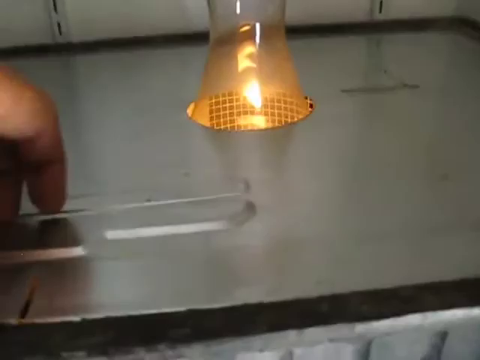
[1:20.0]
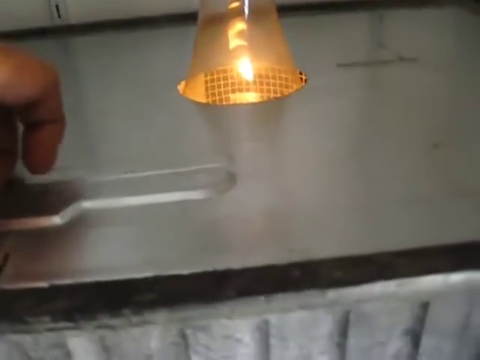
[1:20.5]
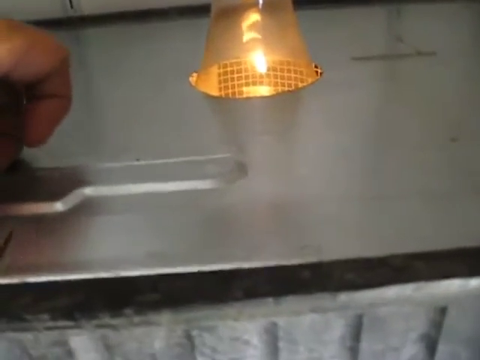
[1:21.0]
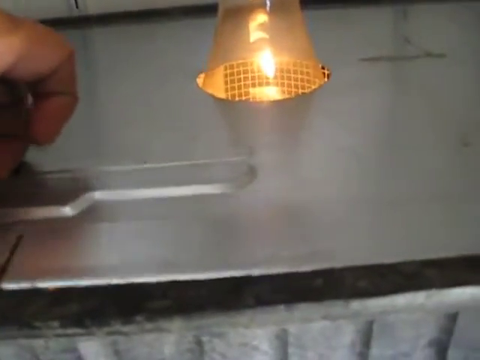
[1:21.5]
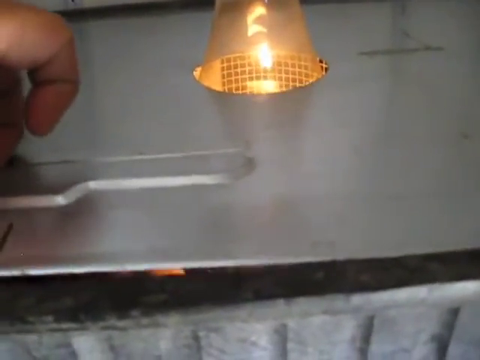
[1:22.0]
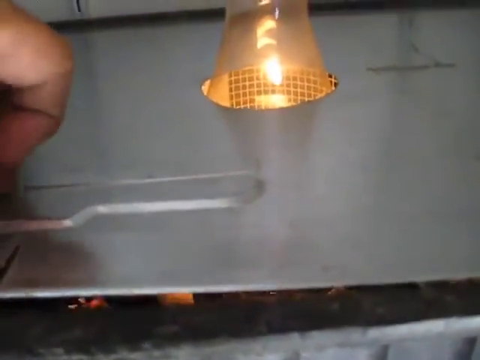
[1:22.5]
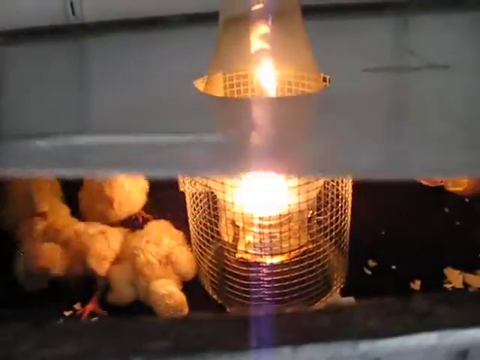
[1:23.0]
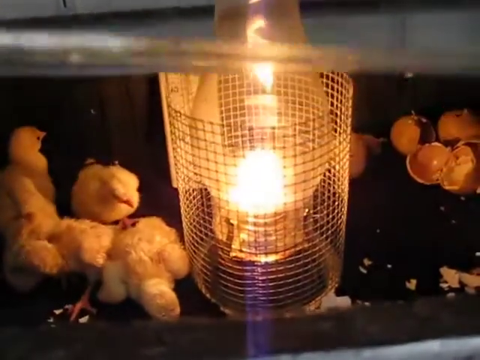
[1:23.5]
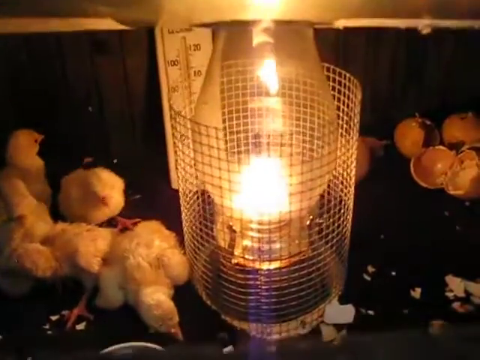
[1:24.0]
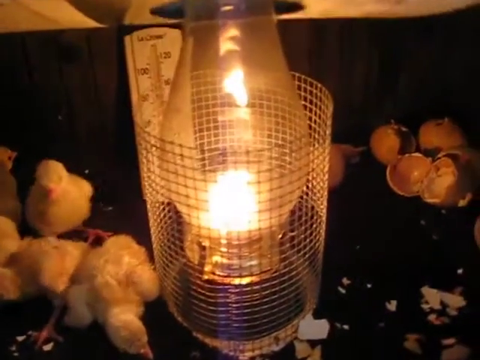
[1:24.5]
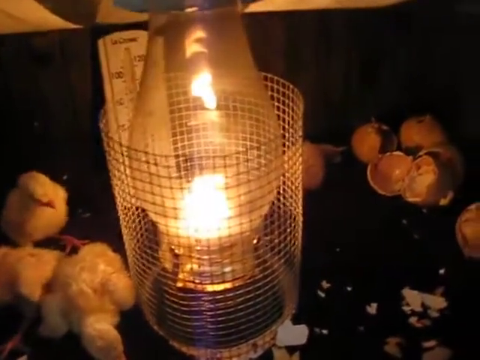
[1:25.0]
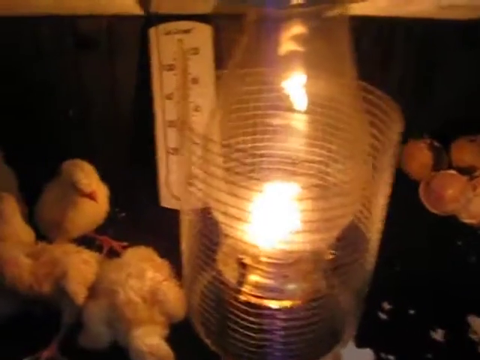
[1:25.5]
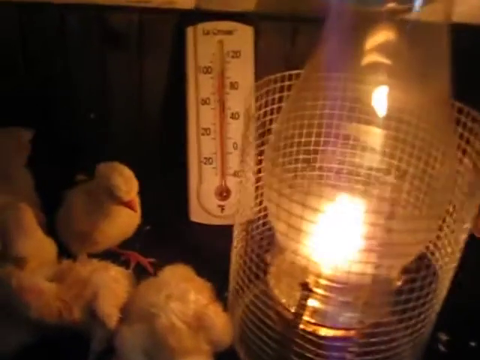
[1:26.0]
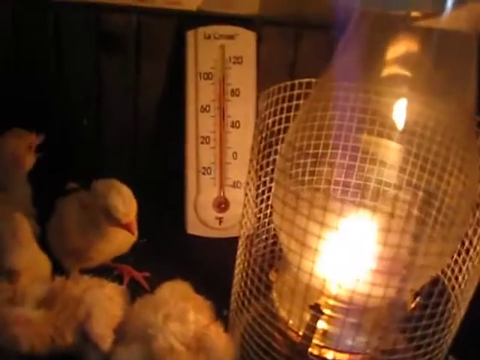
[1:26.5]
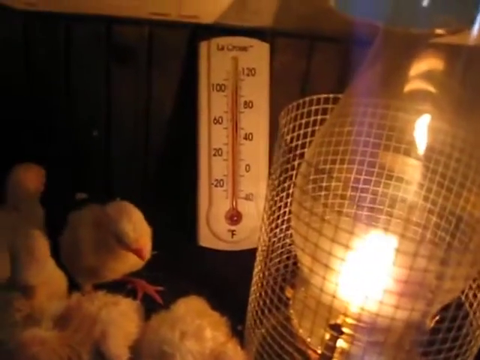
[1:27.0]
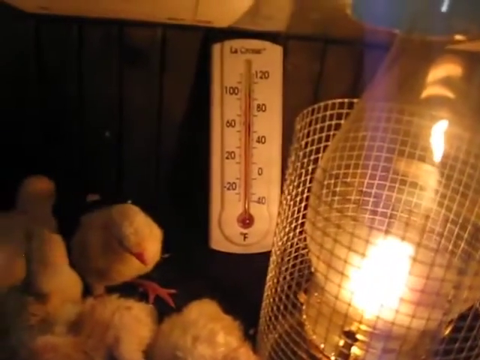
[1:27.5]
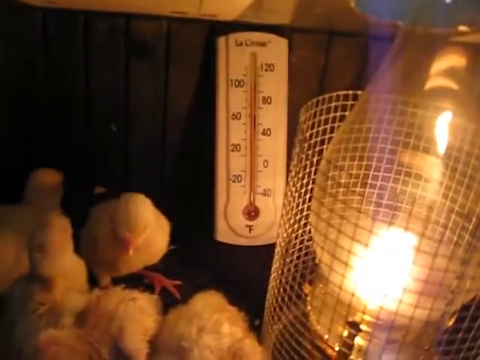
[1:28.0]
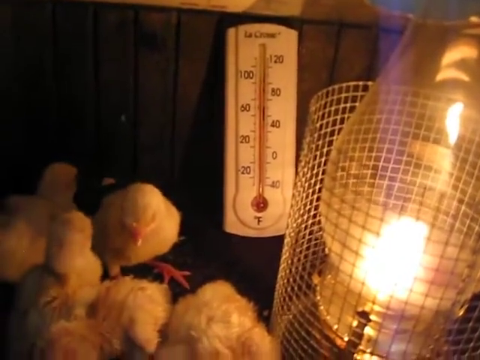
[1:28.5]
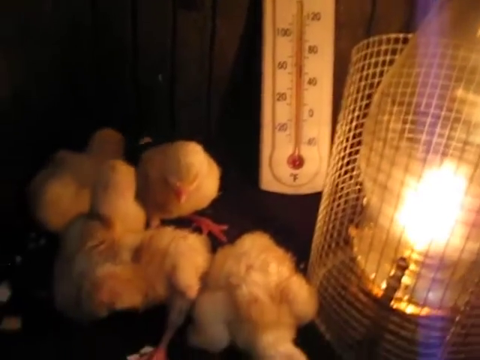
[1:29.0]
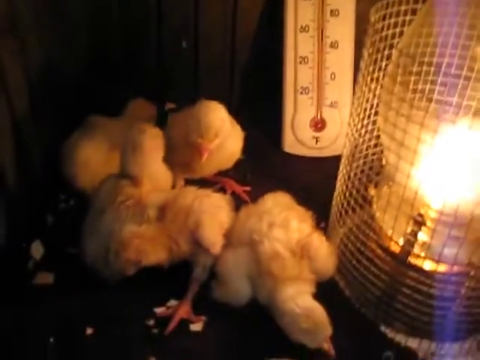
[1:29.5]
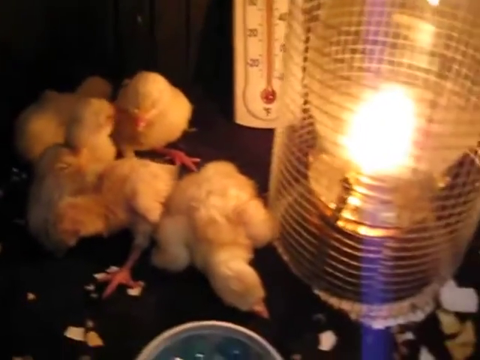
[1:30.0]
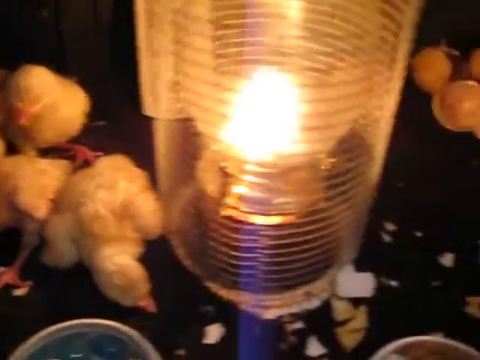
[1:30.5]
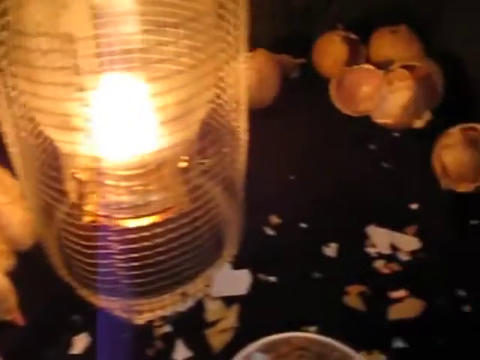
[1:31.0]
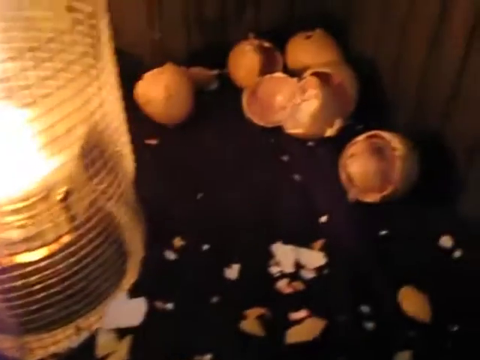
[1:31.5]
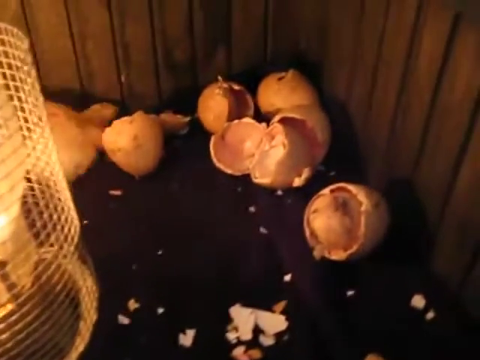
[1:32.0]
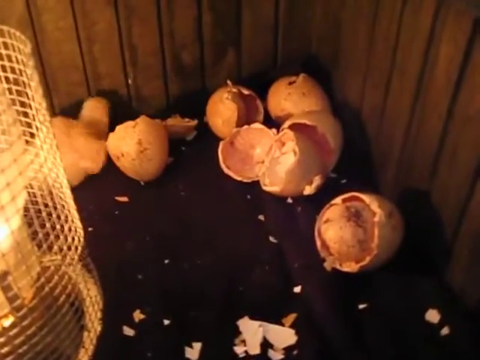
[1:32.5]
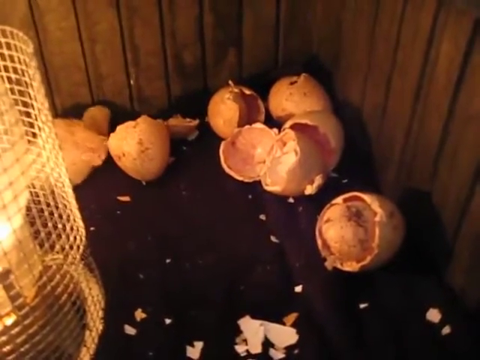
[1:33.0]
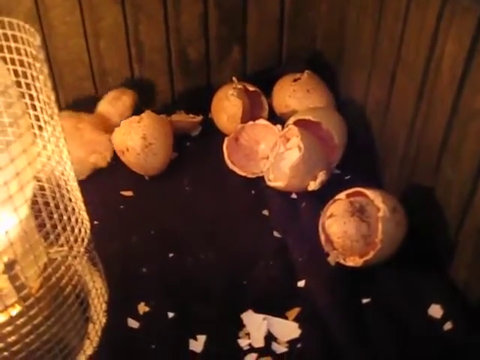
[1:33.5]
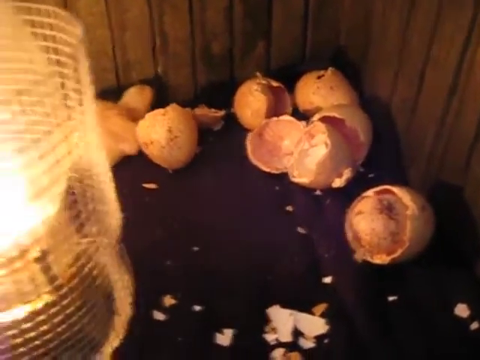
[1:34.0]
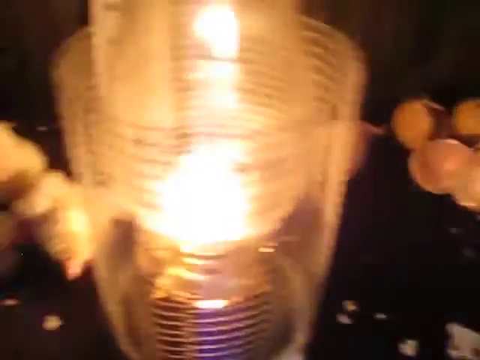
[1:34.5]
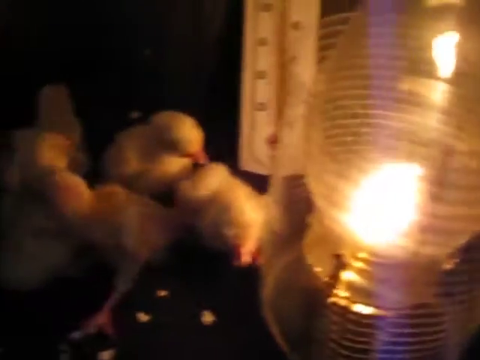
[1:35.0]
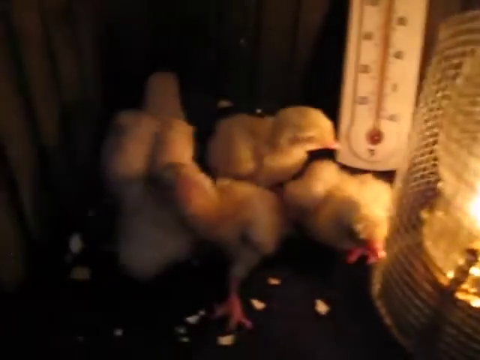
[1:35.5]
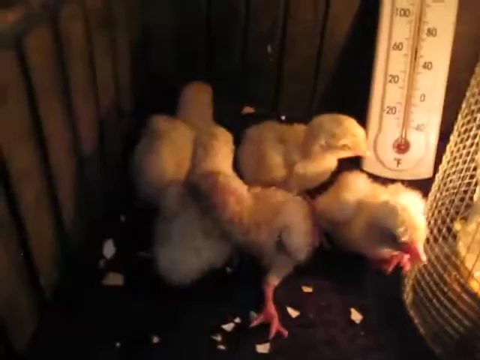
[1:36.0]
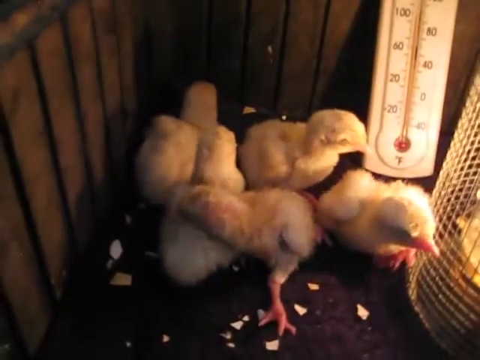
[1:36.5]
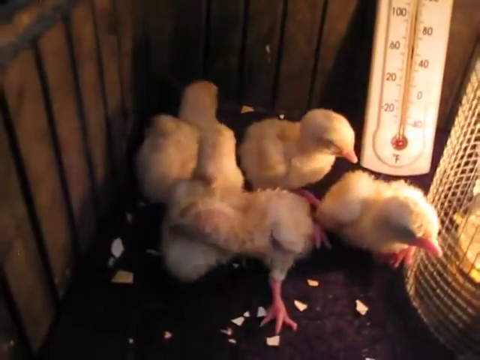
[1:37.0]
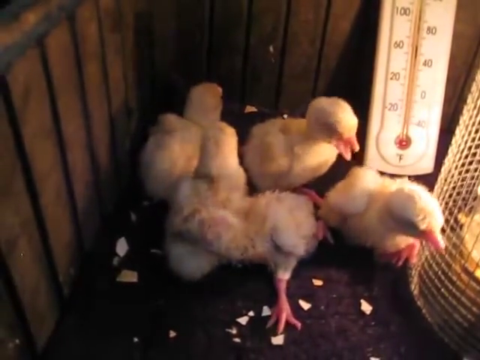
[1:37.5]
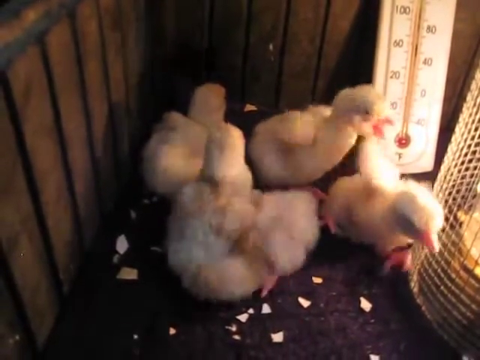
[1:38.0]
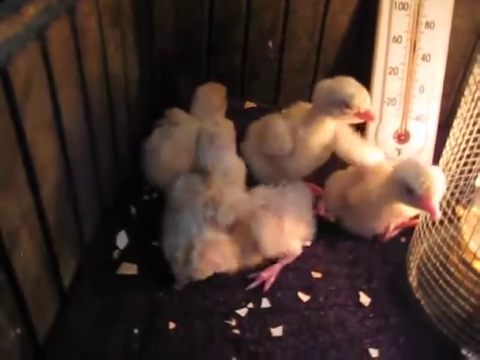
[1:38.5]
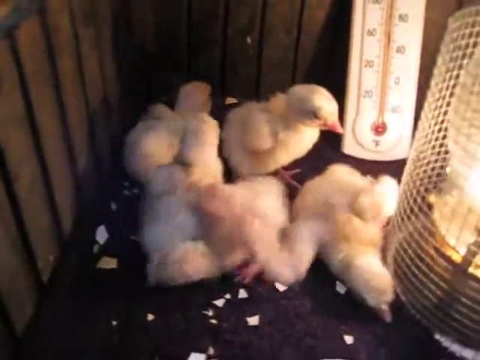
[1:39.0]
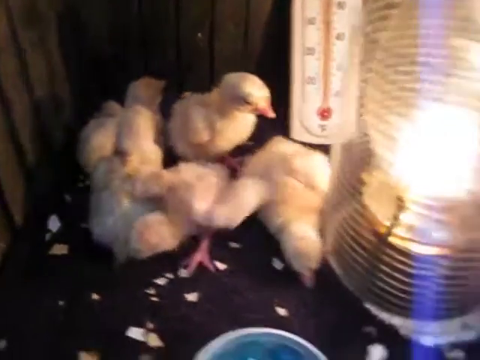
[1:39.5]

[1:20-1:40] The man seems to continue explaining something about the machine. He lifts the covering of the gray machinery, and inside there is a lamp in the middle providing heat, with small chicks and, on the other side, eggs and eggshells, suggesting the chicks have apparently just hatched. At the top inside the gray box is a thermometer marked from -40 to -20, 0, 20, 40, 60, 80, 100 and 120. Other shells have been pushed together, and cracked eggshells are visible.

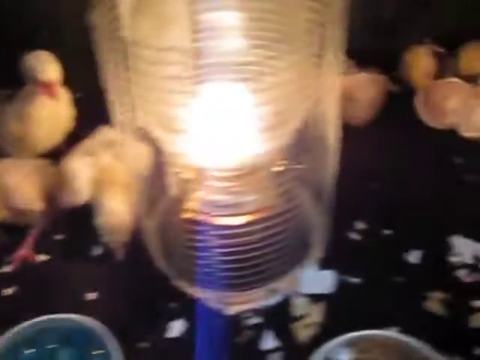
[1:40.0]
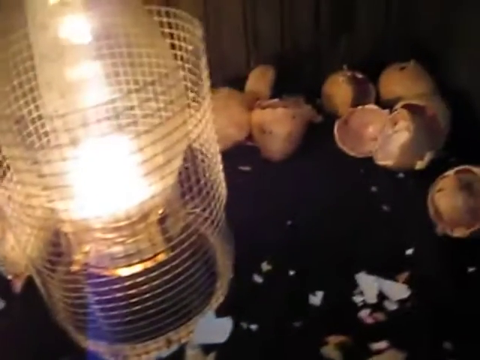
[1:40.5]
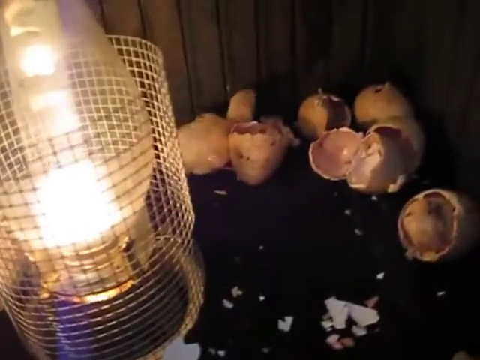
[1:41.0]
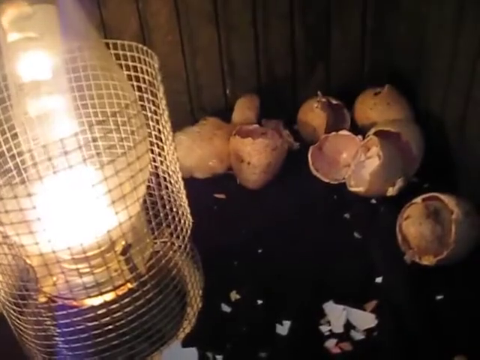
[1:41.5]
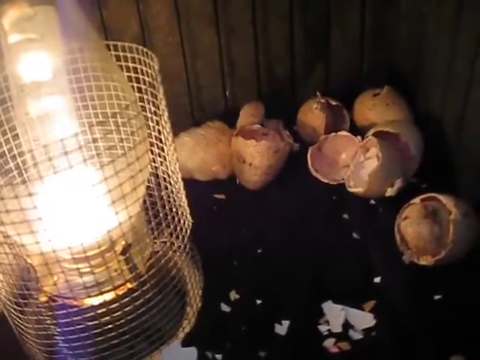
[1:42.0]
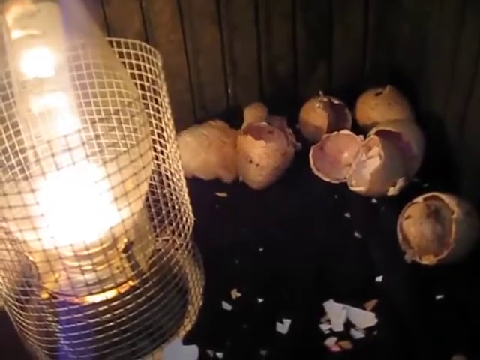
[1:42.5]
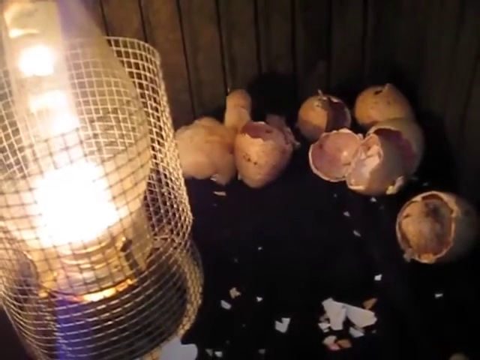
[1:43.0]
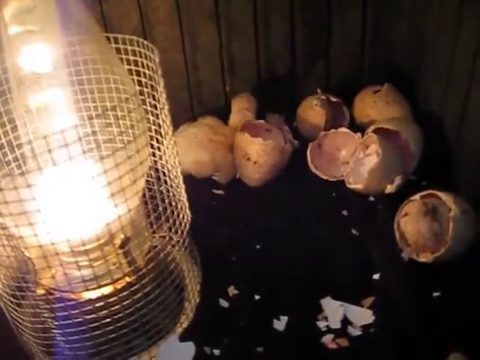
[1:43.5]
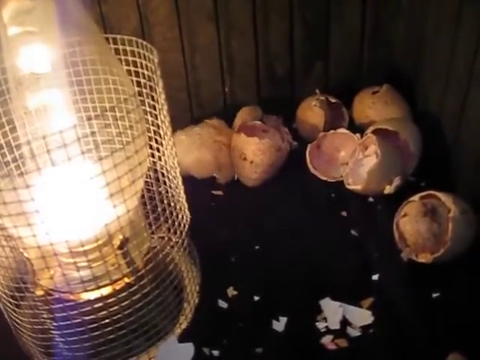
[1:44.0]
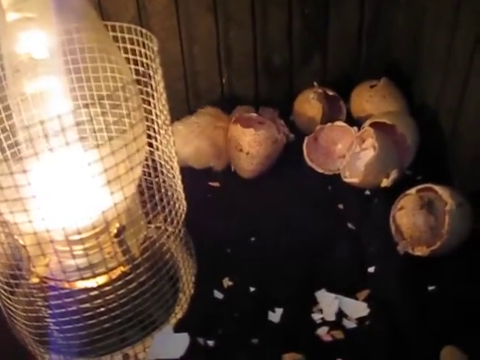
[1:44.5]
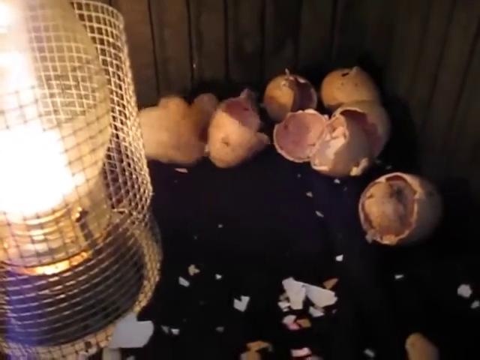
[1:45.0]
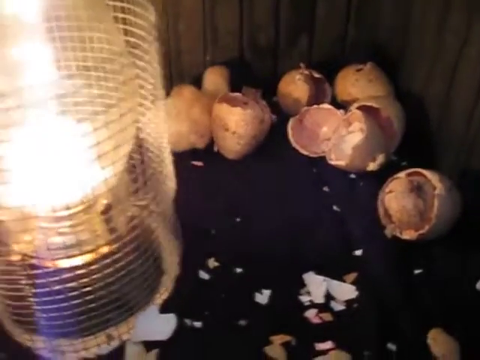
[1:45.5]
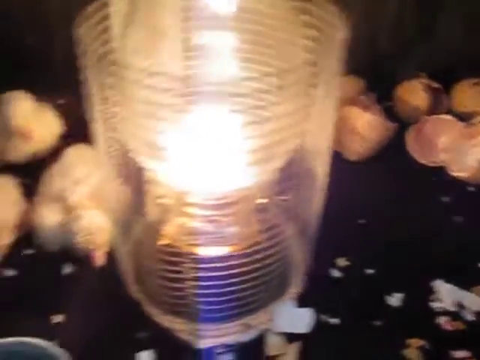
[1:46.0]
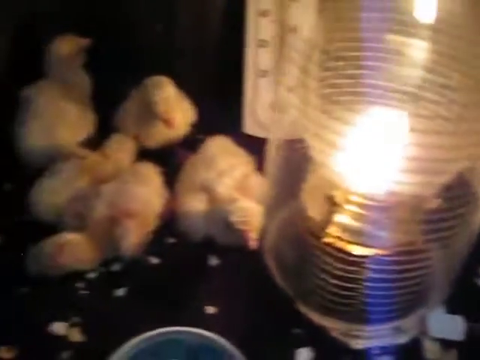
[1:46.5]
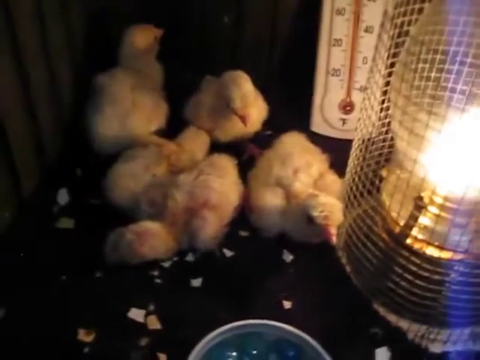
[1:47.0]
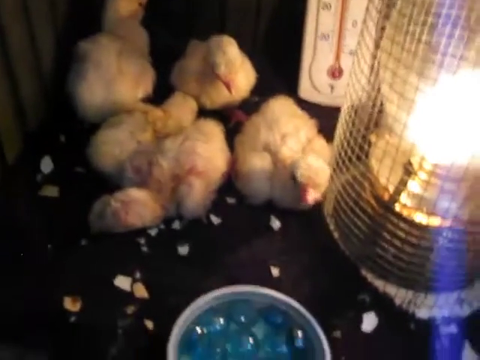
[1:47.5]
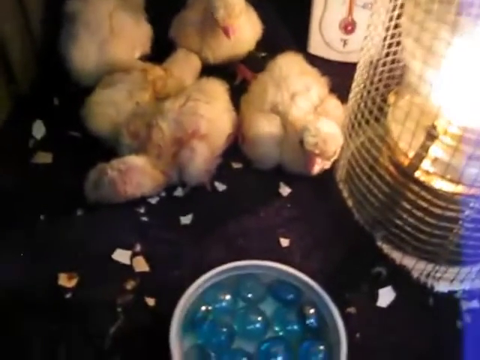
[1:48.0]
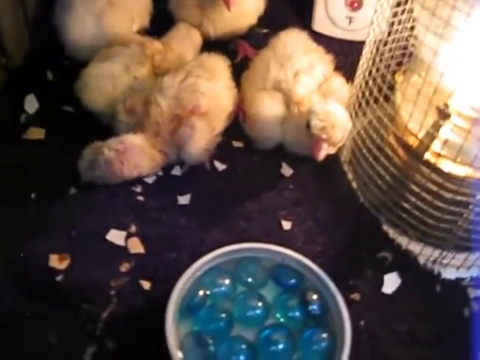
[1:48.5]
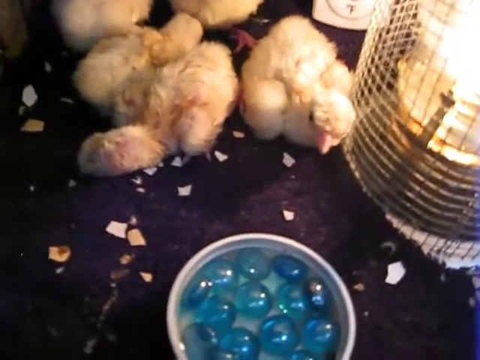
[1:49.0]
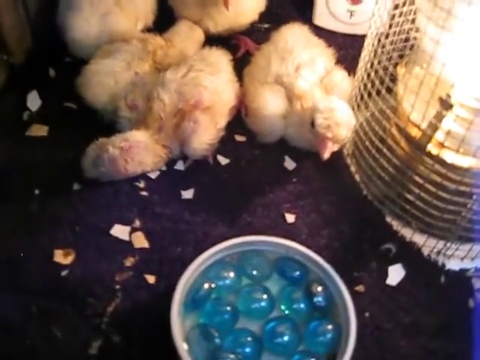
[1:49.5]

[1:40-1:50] It appears that one of the chicks has not come out of its egg. Some of the chicks are huddled next to the lamp, which may be providing heat in the area. One chick has wandered away to the side of the eggshells and is biting and chipping into them, creating a mess. The area is fenced around with clothing. A bowl with blue particles in it is shown, possibly water provided for the chicks.